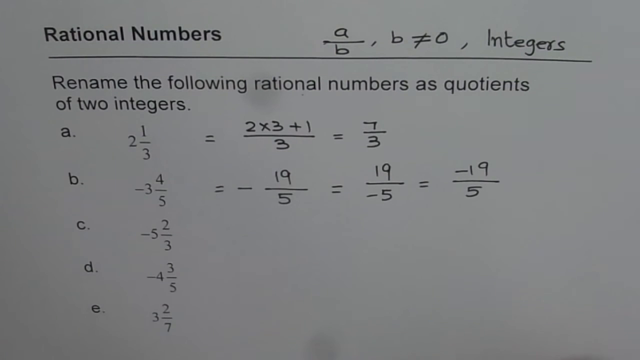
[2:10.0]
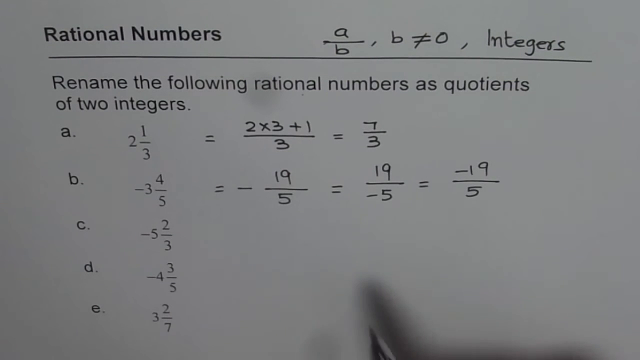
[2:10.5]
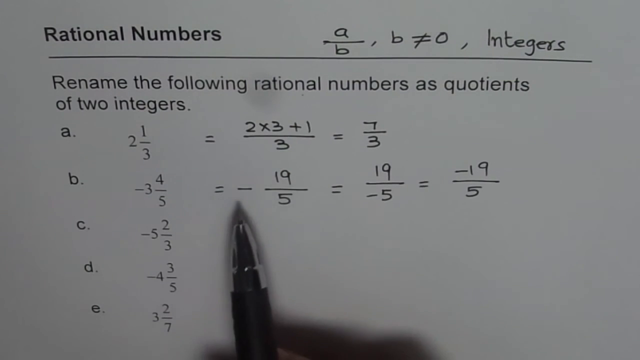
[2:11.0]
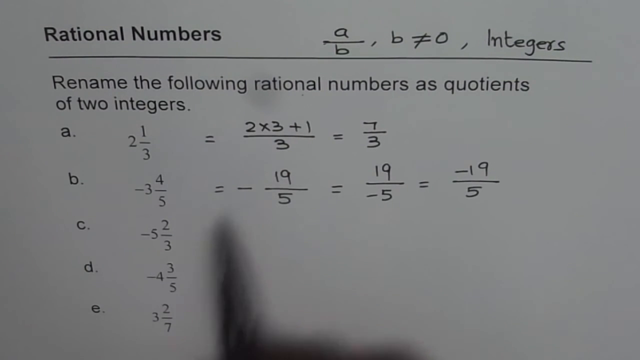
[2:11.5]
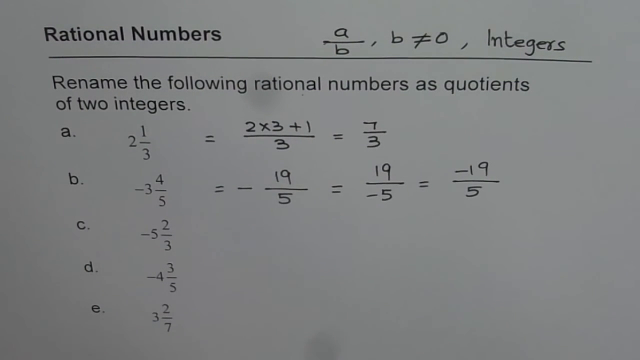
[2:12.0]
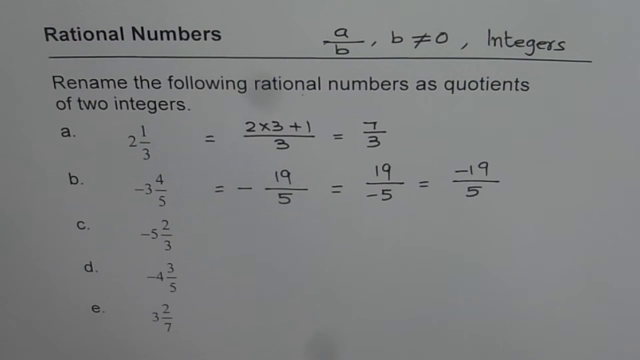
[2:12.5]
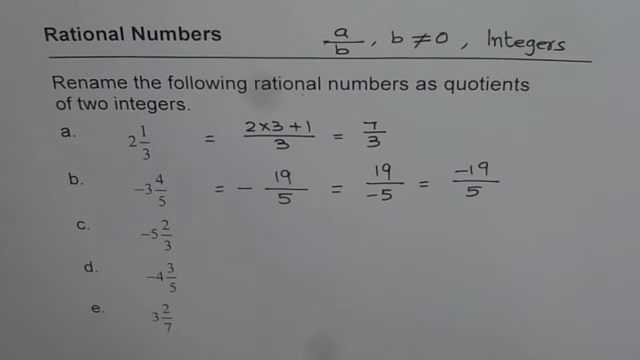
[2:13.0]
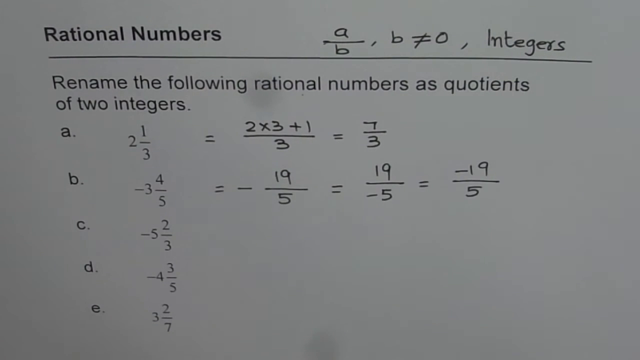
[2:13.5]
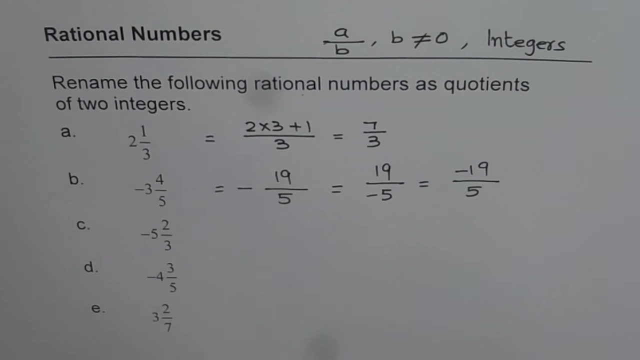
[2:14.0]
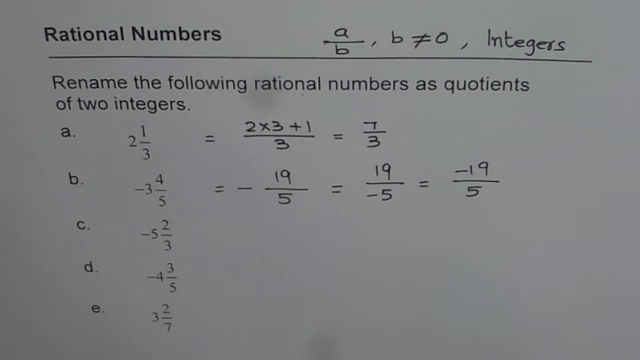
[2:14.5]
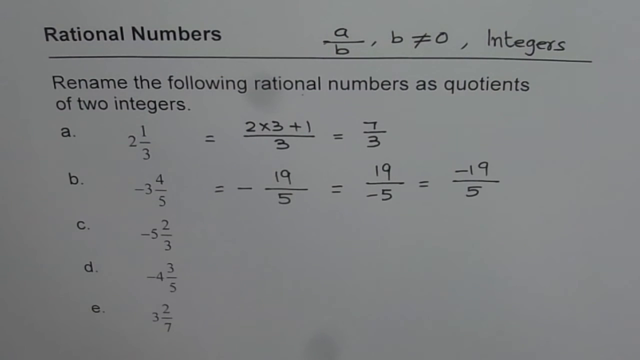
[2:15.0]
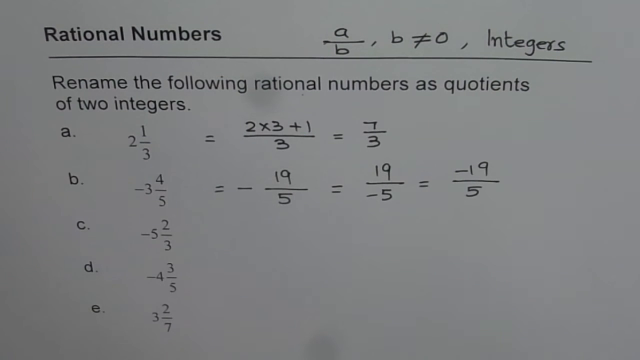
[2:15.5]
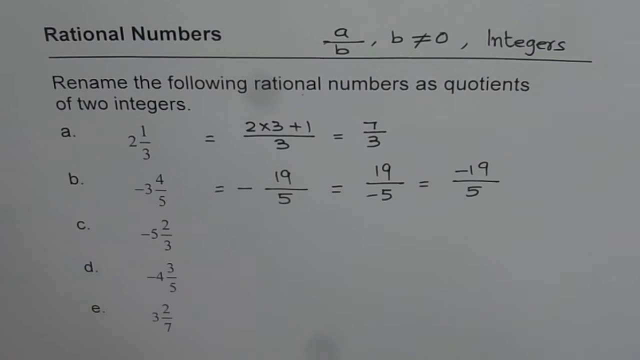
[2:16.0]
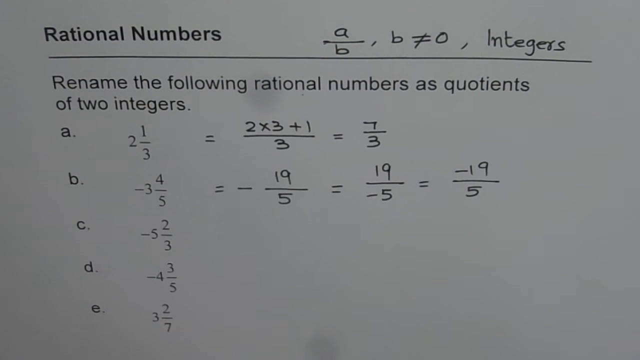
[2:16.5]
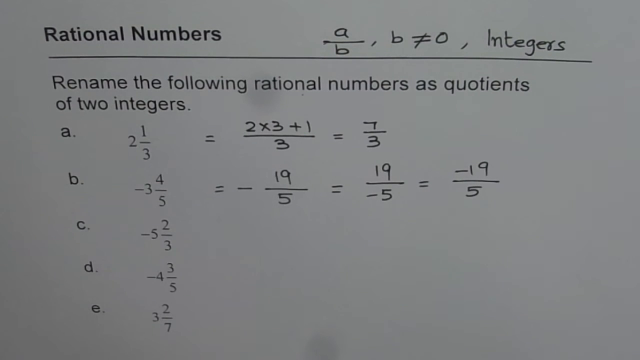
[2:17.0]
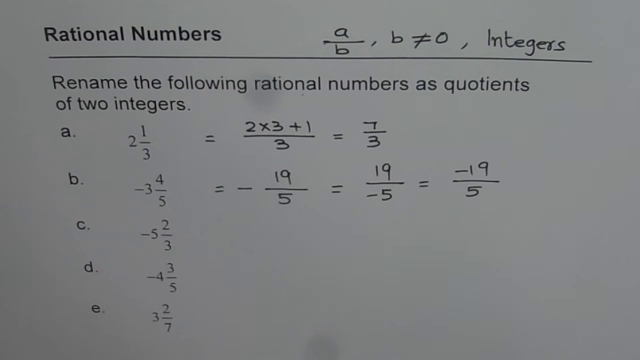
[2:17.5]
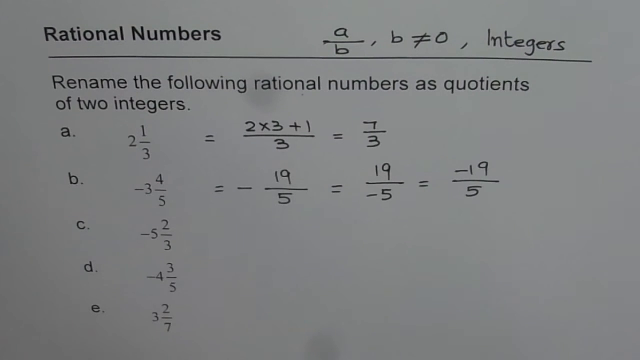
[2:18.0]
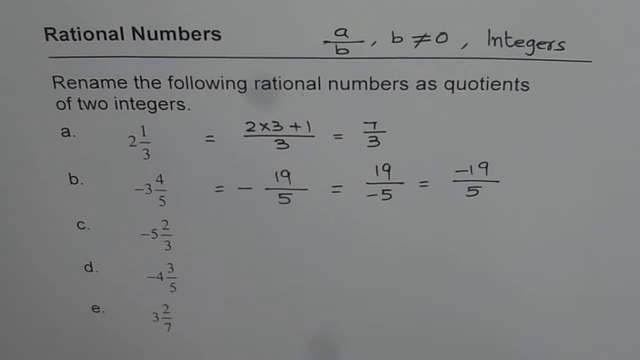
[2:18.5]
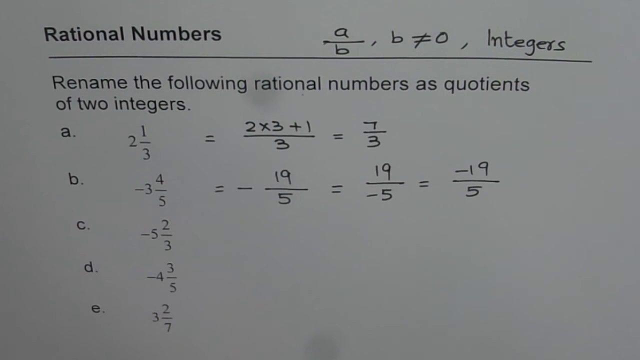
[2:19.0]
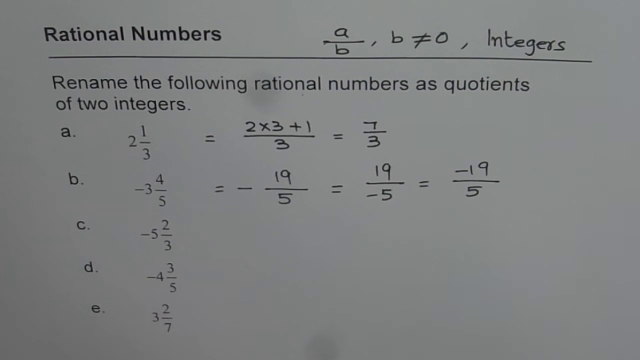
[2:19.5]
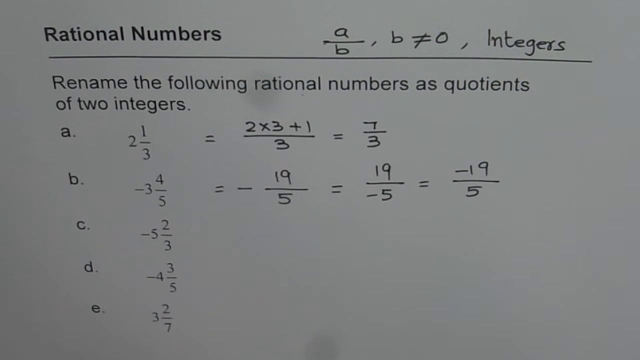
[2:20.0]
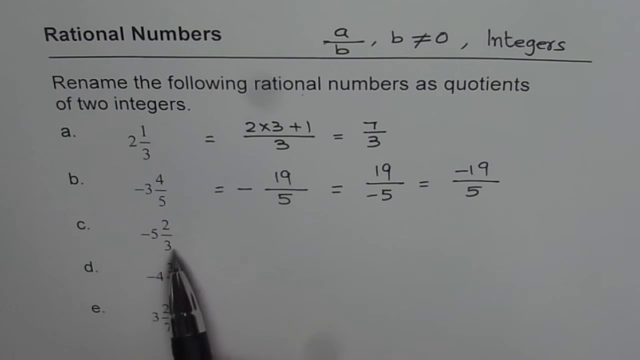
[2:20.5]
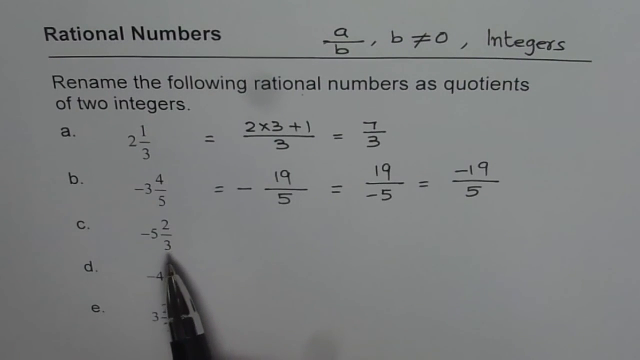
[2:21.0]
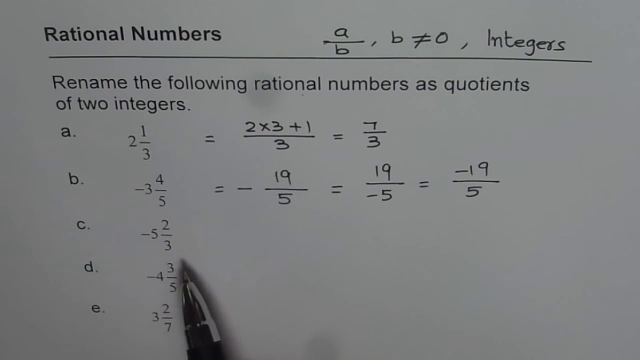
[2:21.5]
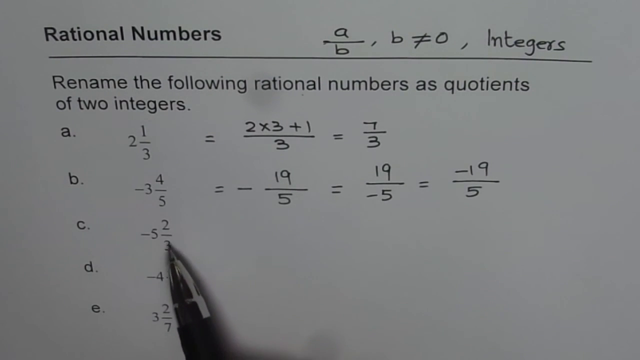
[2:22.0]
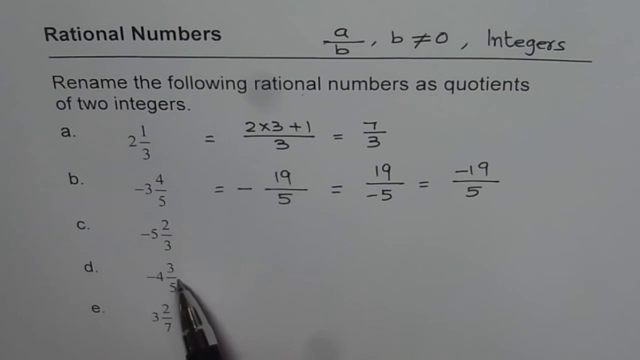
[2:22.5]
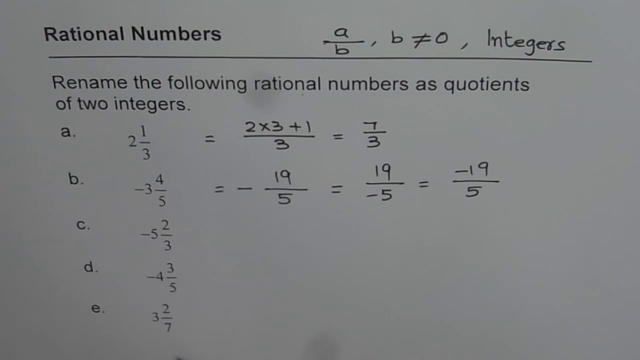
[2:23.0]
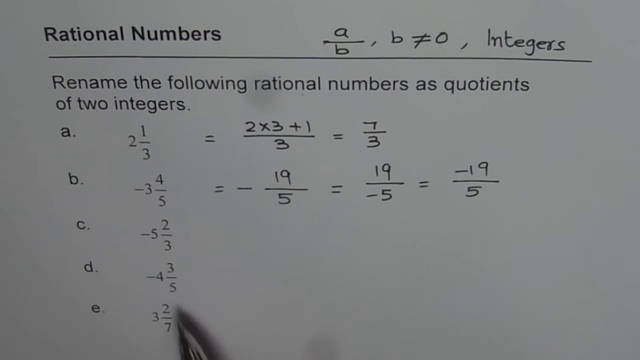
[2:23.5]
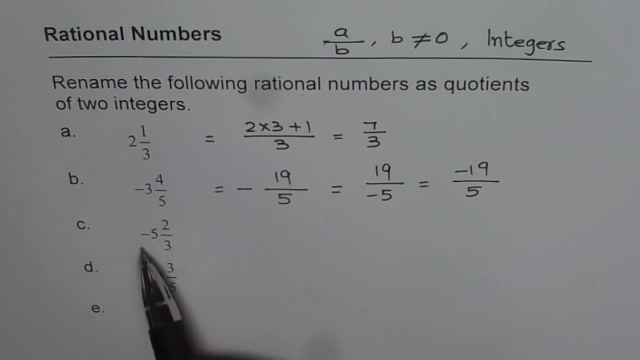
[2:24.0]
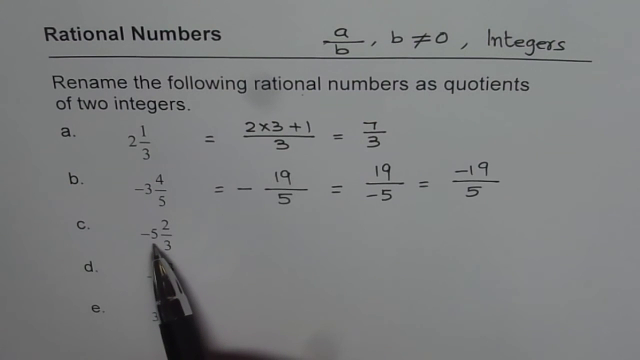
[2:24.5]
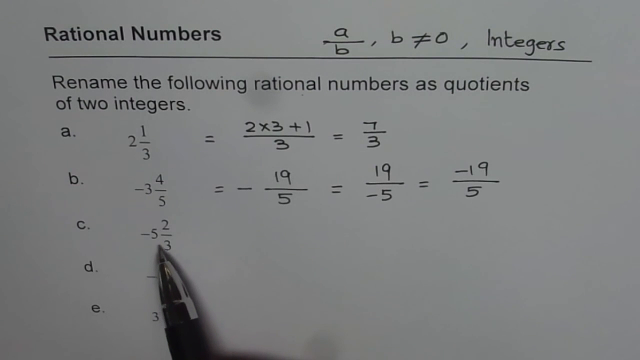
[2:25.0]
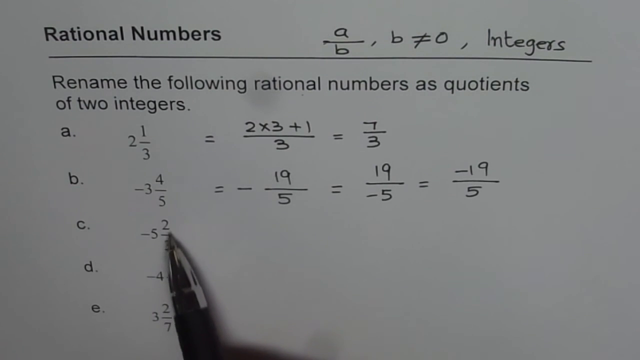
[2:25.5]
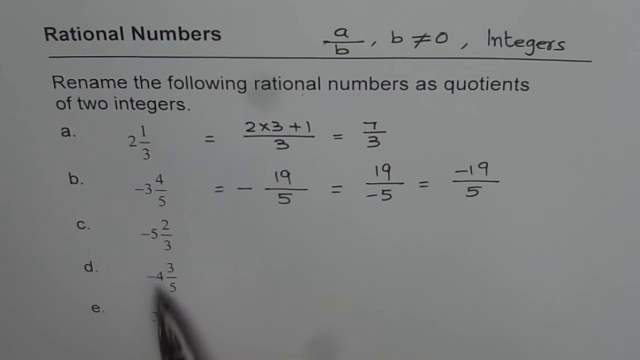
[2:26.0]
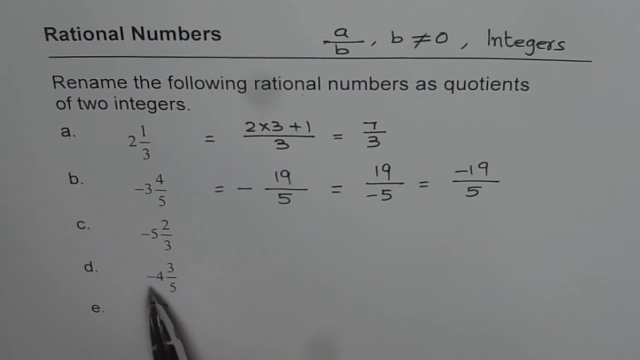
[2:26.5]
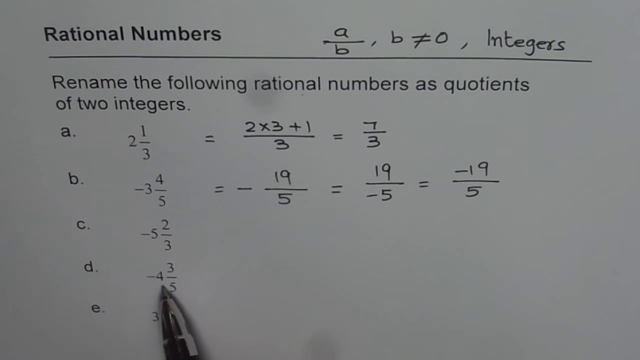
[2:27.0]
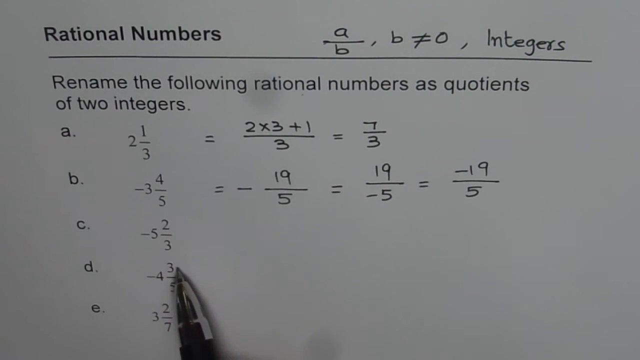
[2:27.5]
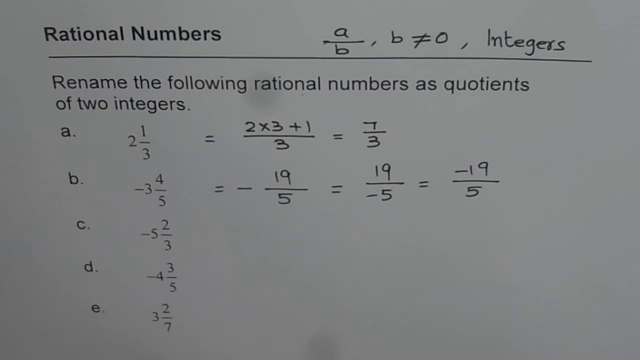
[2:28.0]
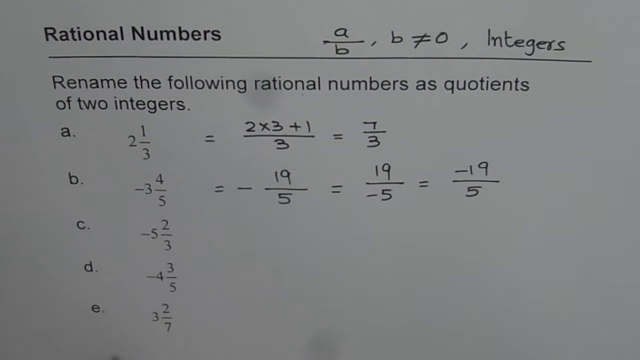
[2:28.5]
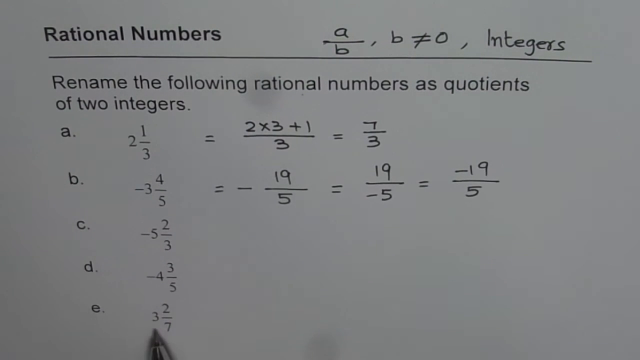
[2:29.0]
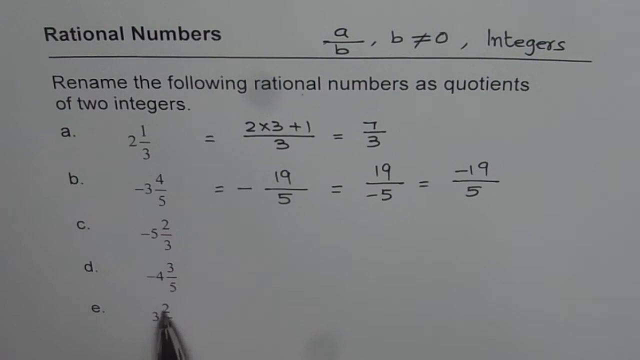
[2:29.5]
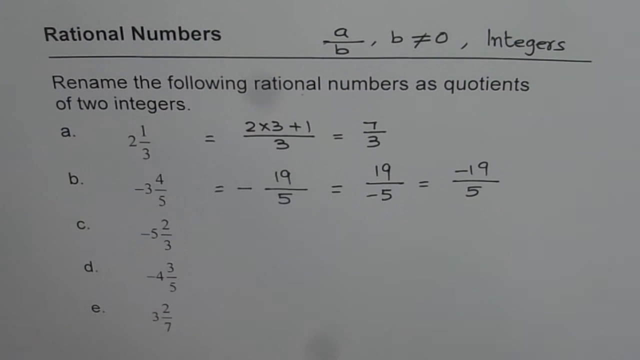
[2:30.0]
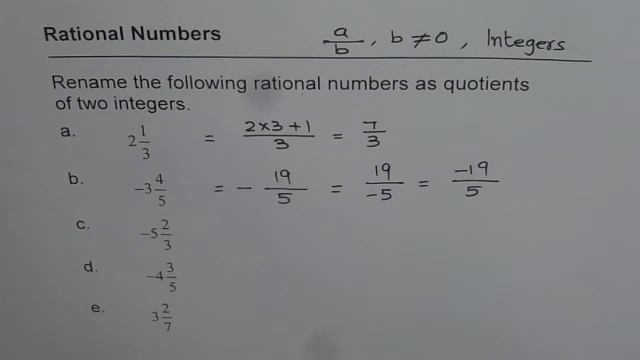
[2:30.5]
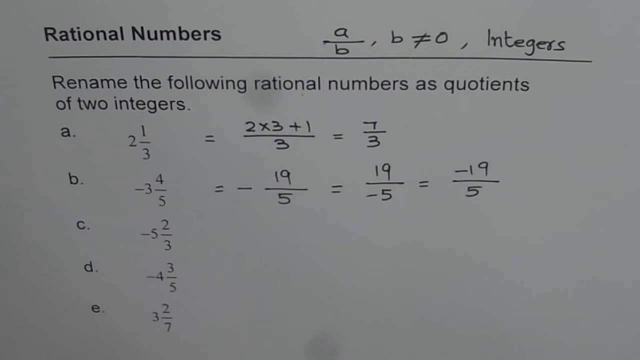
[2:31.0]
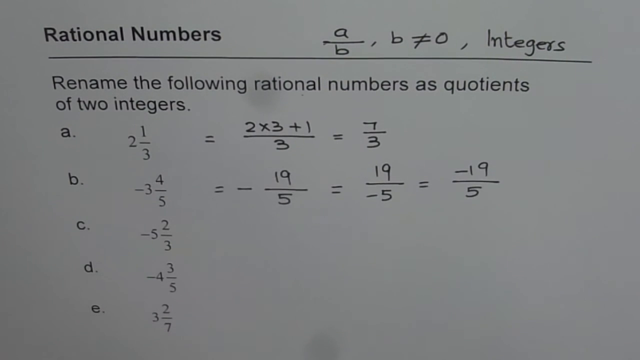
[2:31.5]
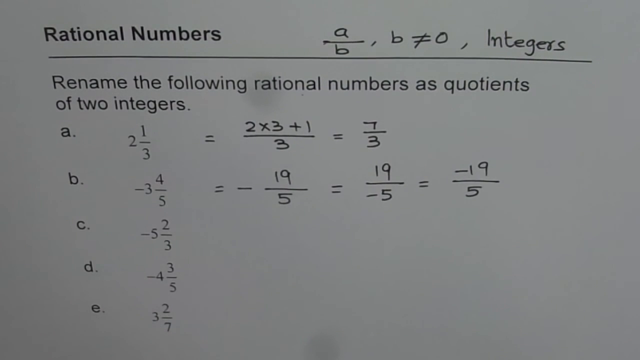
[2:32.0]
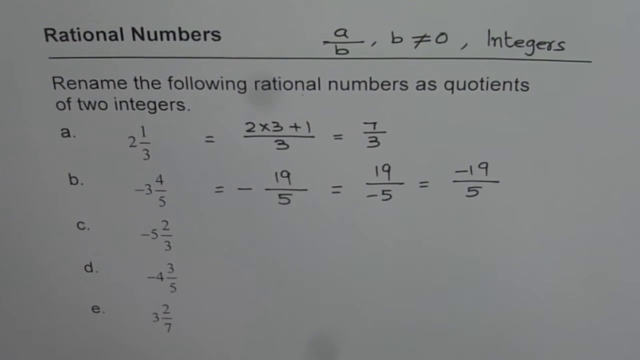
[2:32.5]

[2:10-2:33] The pen briefly points to the negative sign before the 19/5 in the handwritten work beside option B, then briefly leaves the page before a short pause in the video. After the pause, the pen points to option C, and the video pauses briefly again. The hand then points to the -5 in option C, then the 2, and then the 3. The pen moves to option D and highlights part of that answer. Nothing has been written beside options C or D; the person appears to be demonstrating how these answers differ from the other options. Finally, the hand exits at the bottom of the frame.